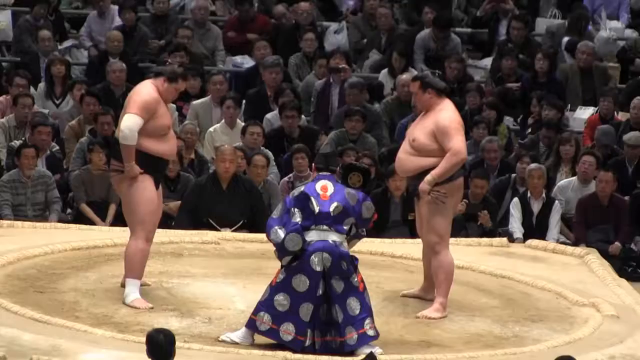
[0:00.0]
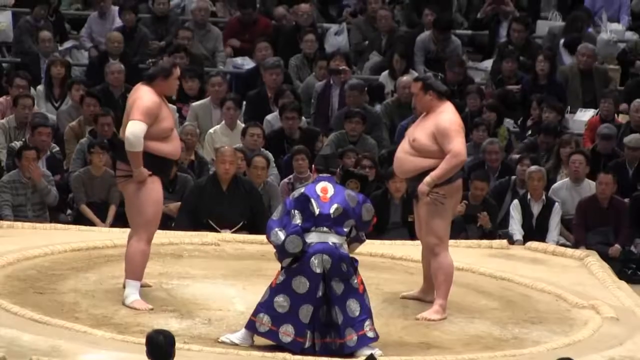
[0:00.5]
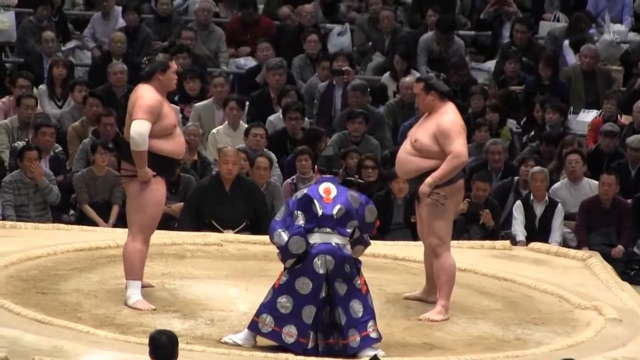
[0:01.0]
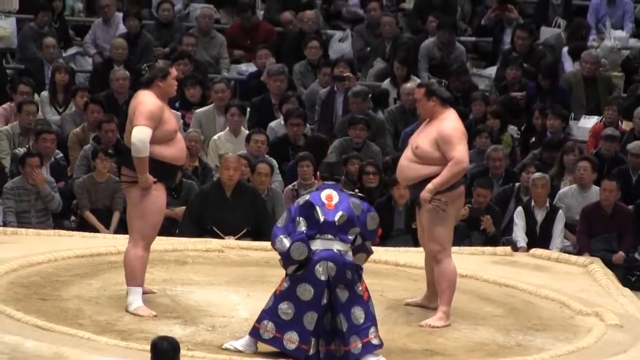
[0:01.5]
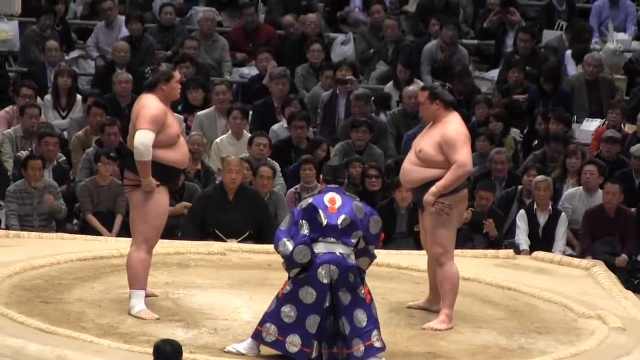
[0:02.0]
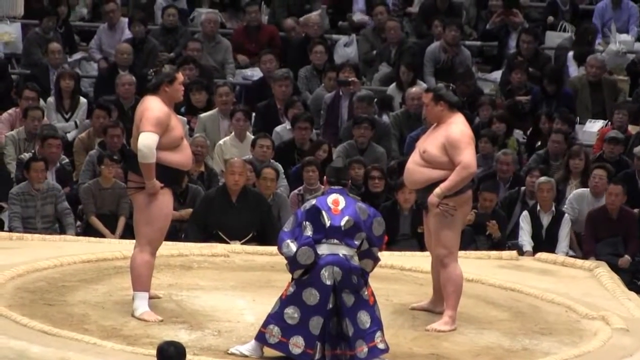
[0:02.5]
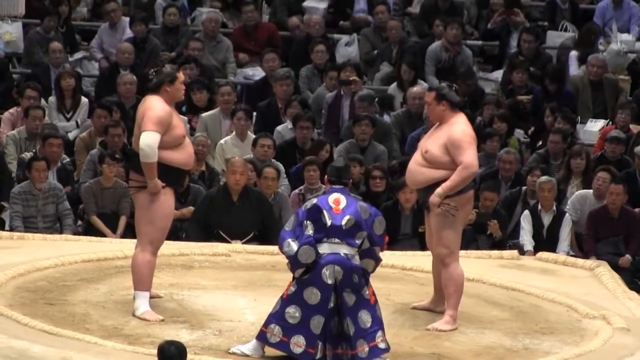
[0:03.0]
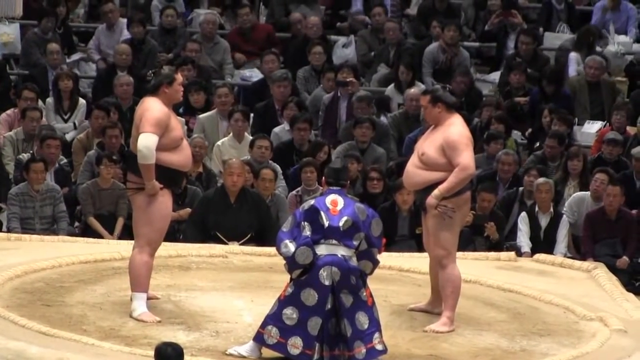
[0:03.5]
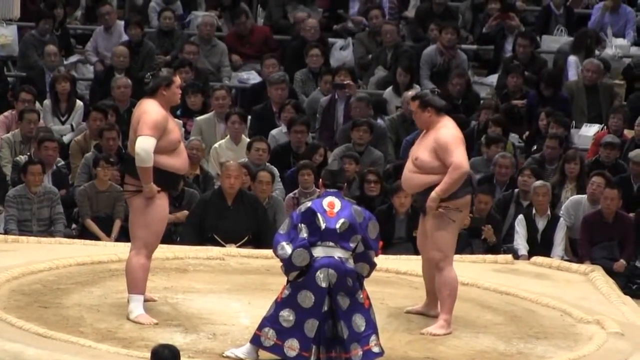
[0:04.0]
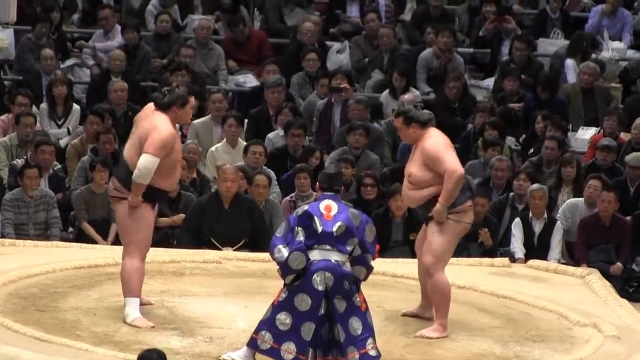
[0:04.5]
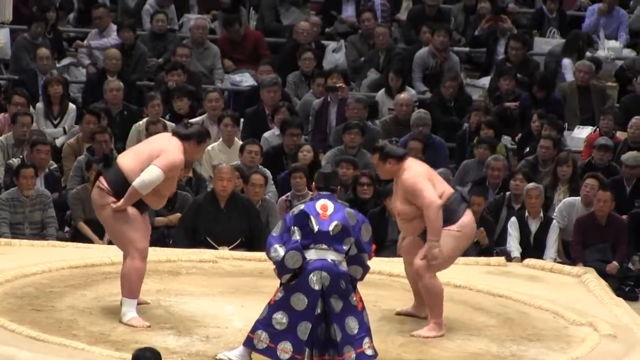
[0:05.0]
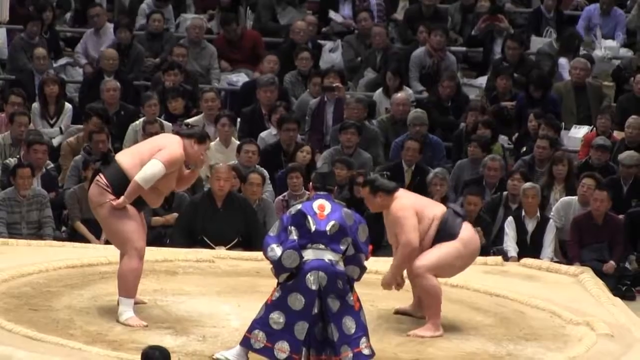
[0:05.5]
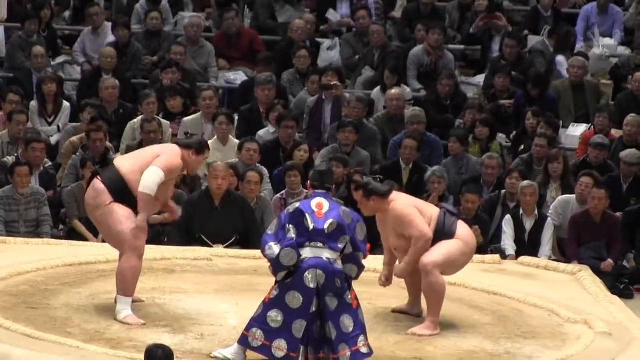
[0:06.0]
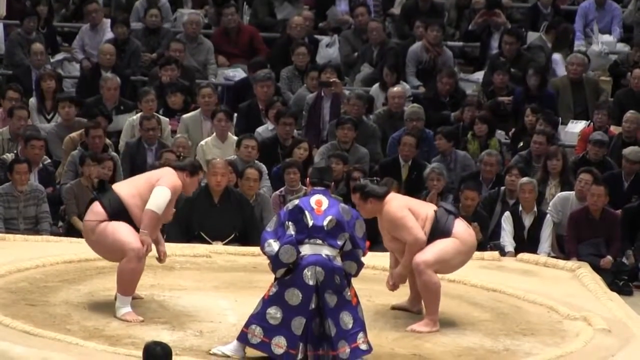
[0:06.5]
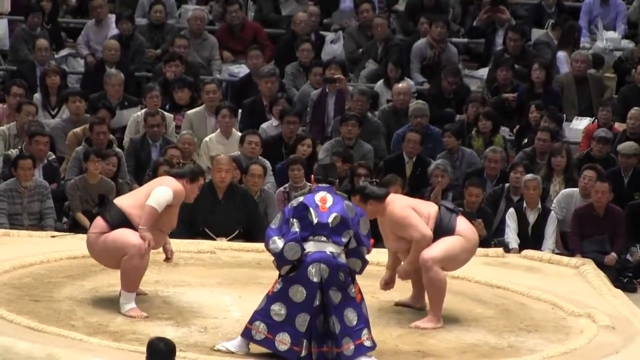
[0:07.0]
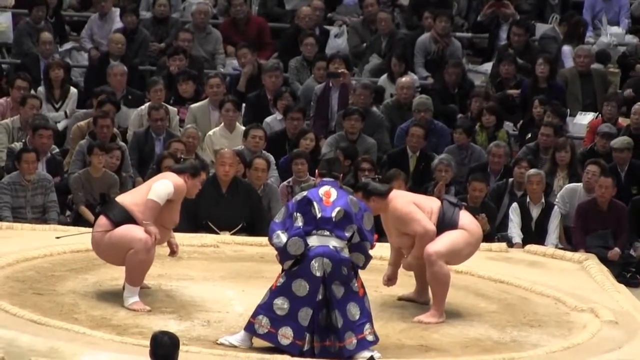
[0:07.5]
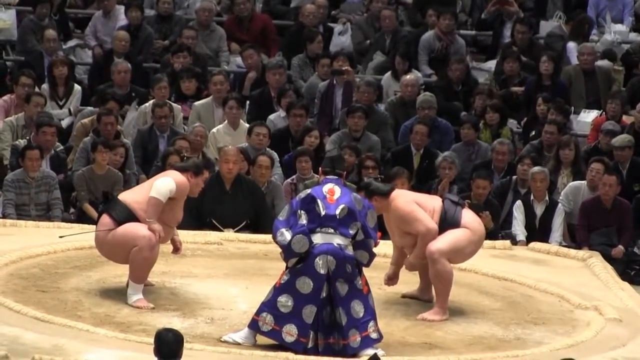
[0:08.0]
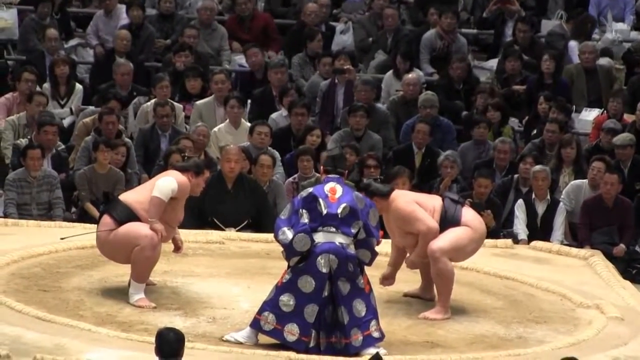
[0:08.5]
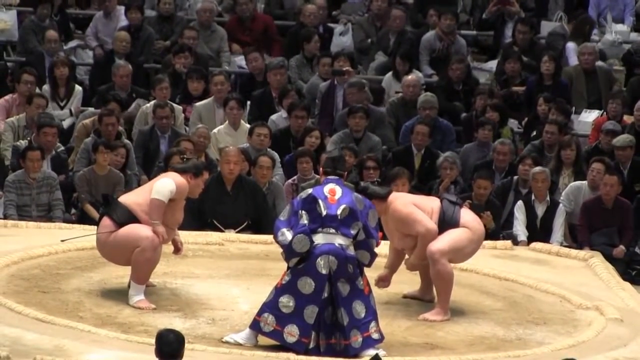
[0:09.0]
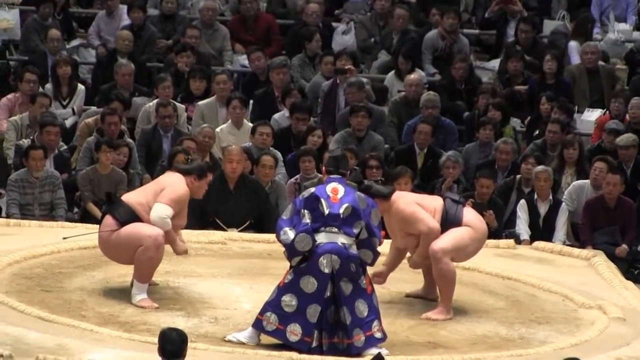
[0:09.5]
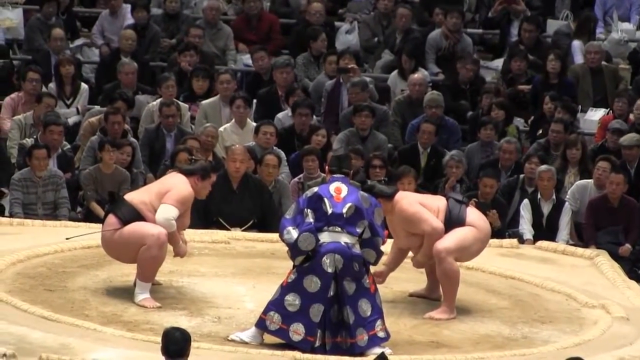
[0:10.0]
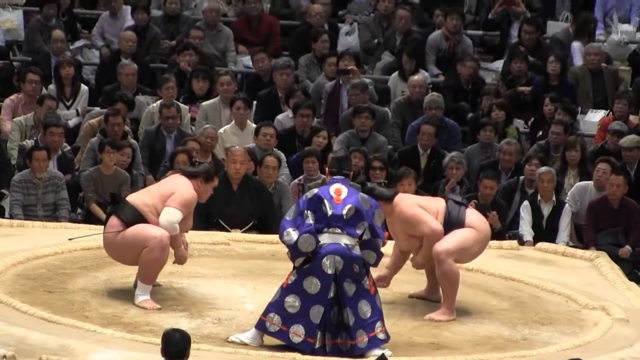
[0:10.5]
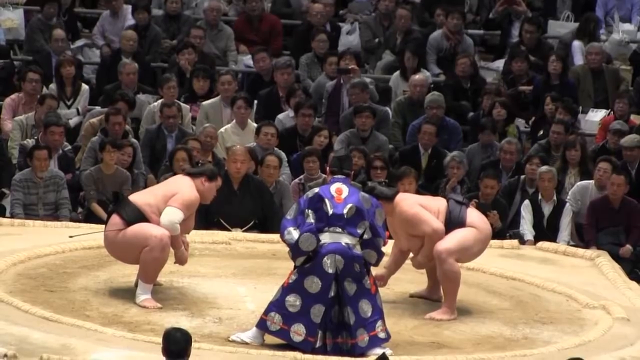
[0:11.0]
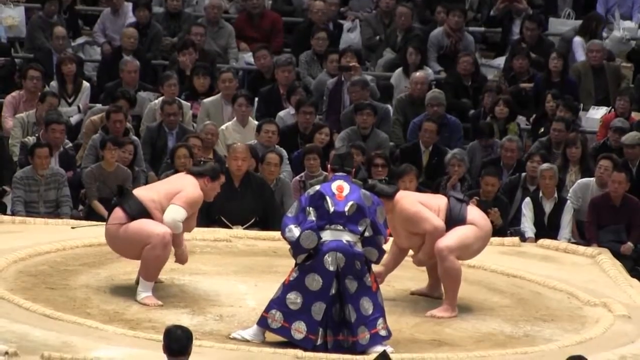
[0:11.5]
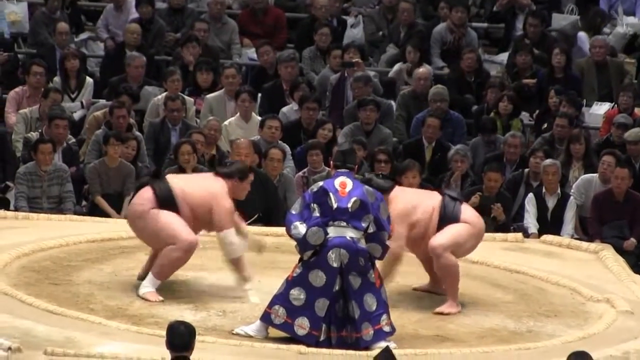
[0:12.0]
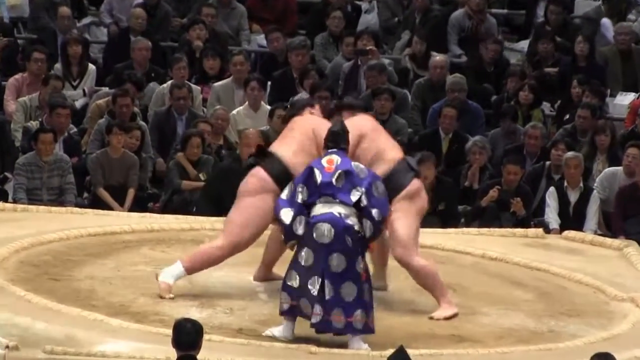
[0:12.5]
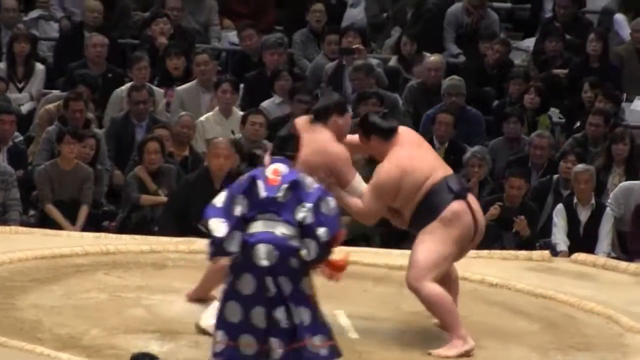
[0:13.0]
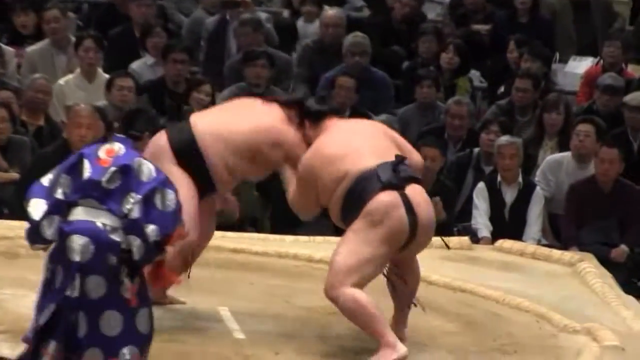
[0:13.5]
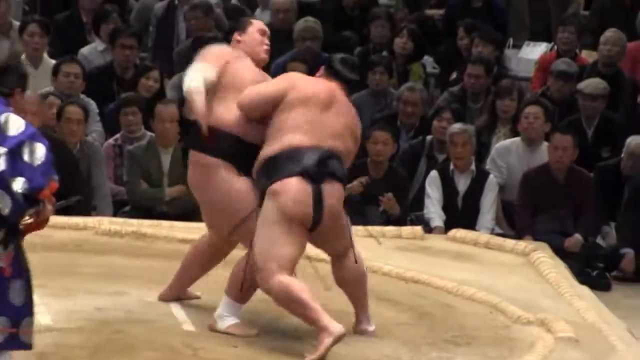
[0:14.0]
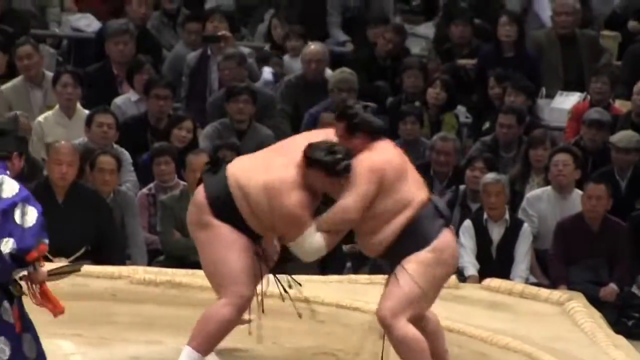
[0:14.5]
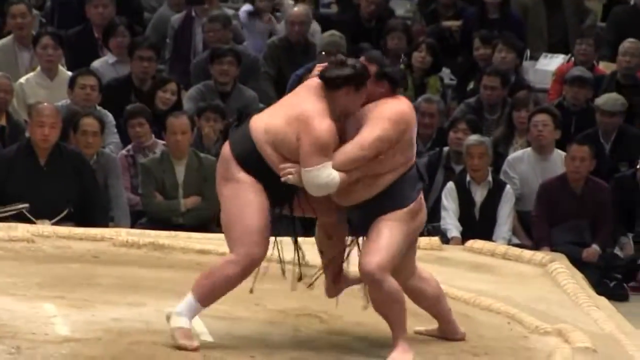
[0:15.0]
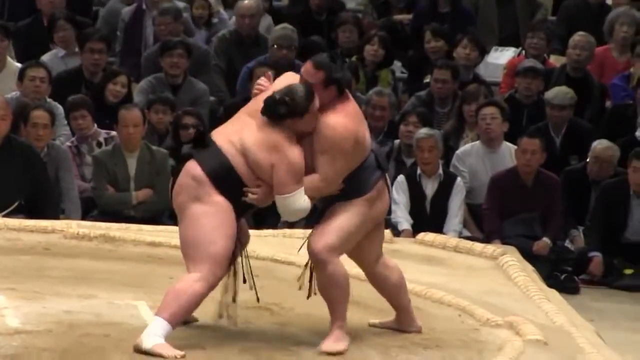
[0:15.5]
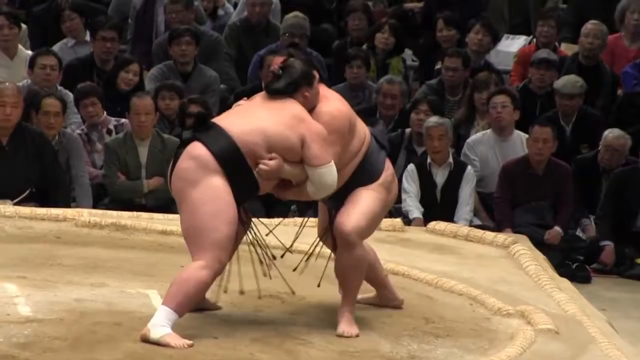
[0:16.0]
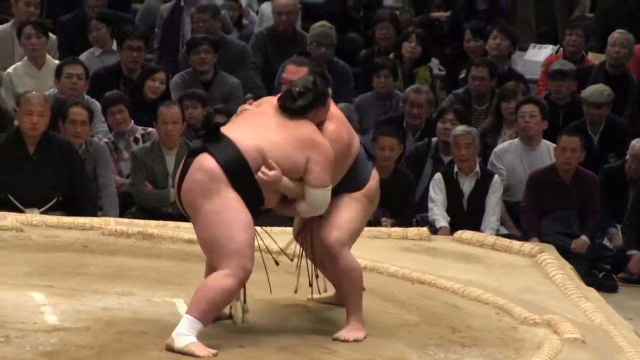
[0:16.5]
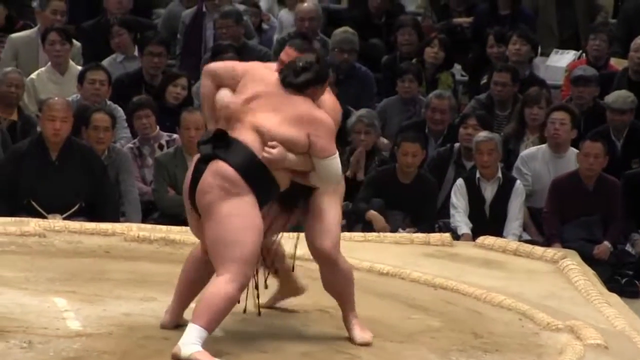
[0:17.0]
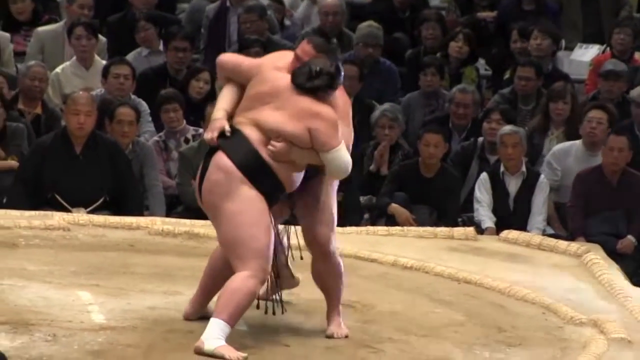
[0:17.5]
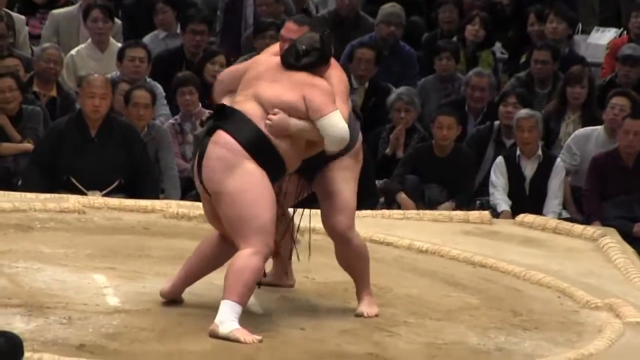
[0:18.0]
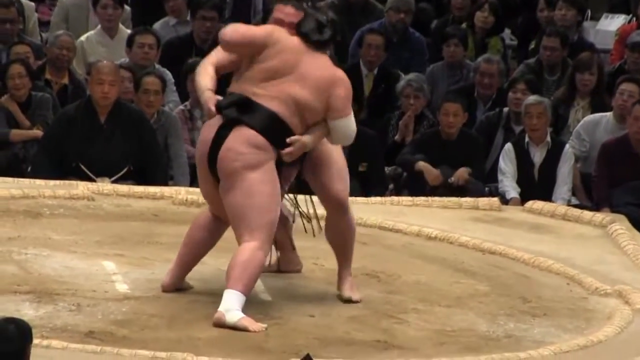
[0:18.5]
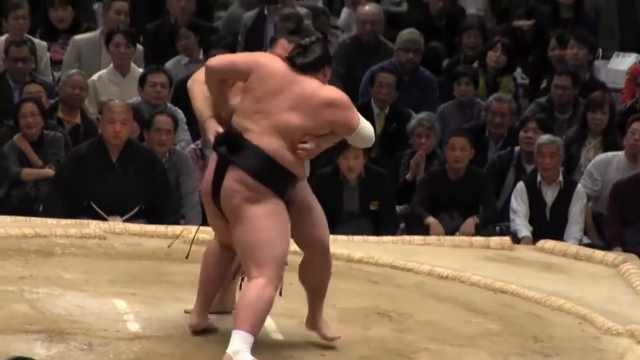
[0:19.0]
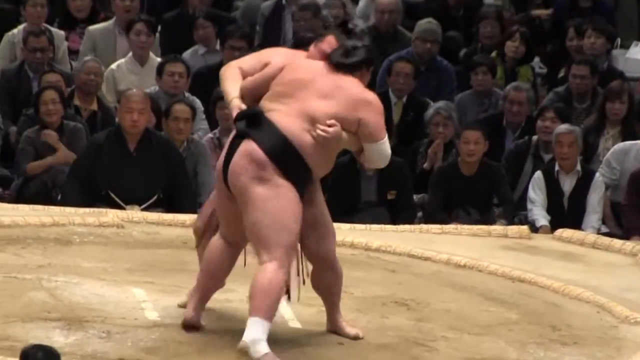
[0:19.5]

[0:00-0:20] Two very large sumo wrestlers face each other; one looks a little chubbier than the other, and the one on the right looks like he weighs a little more. Both lean down. They wear black belts around their waists. The wrestler on the left has a white wrap around his elbow and another white wrap around his ankle. Both stand barefoot on top of a flat dirt mound, and both have their hair put back in man buns. A judge near them is dressed in fancy clothing covered in very shiny silver circles. The two wrestlers make eye contact and look at each other, then slam into each other's shoulders. One tries to push and lift the other over but has not succeeded yet. The two wrestlers look at each other.